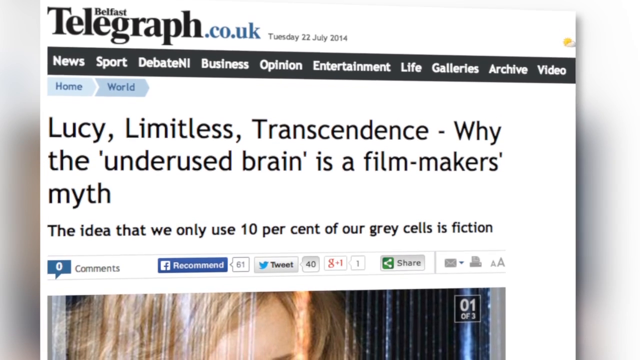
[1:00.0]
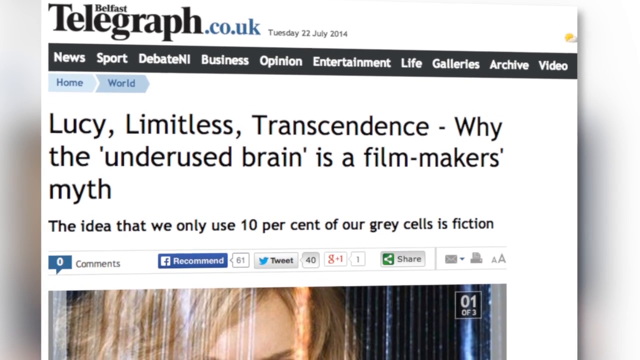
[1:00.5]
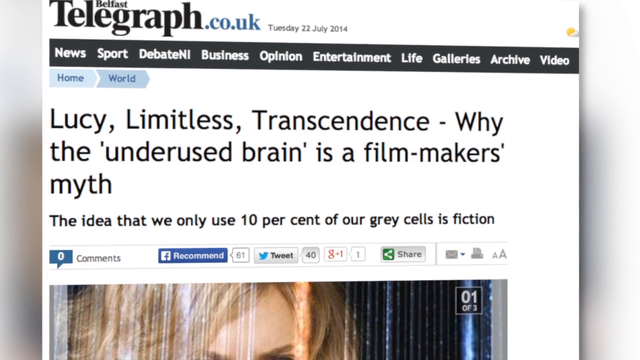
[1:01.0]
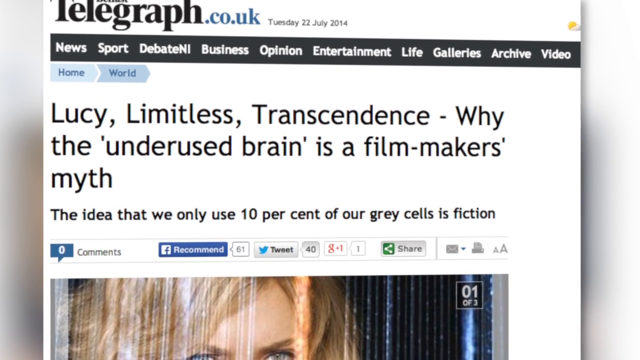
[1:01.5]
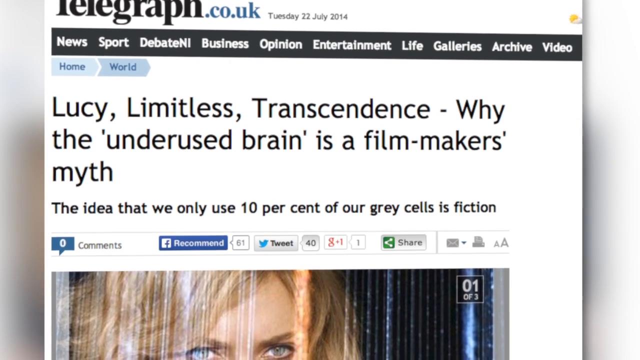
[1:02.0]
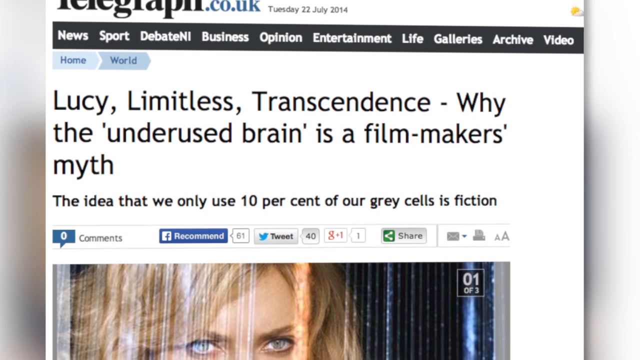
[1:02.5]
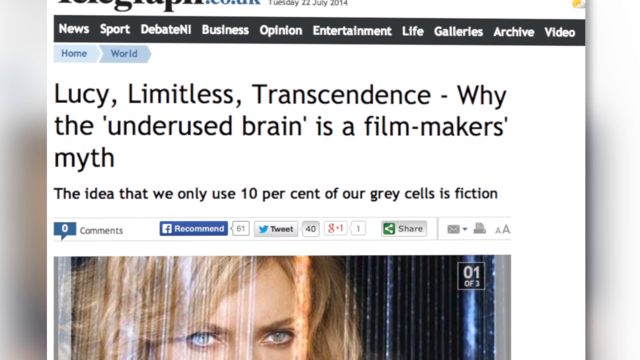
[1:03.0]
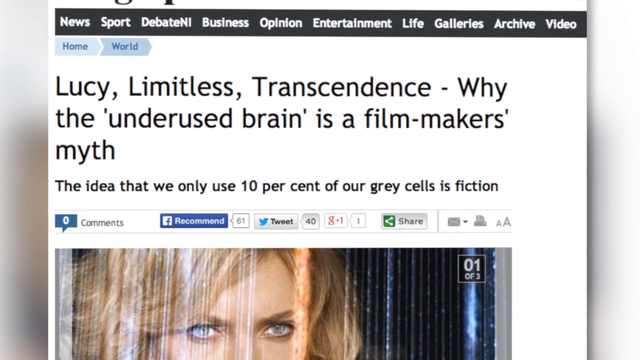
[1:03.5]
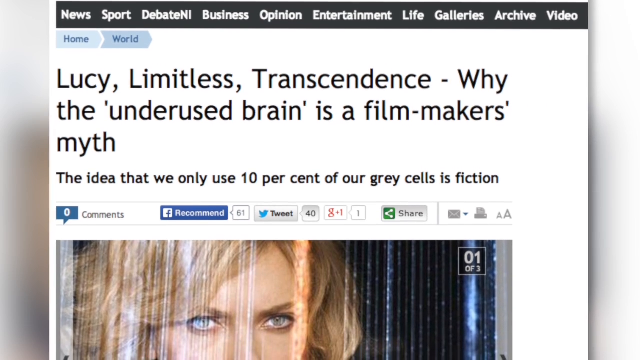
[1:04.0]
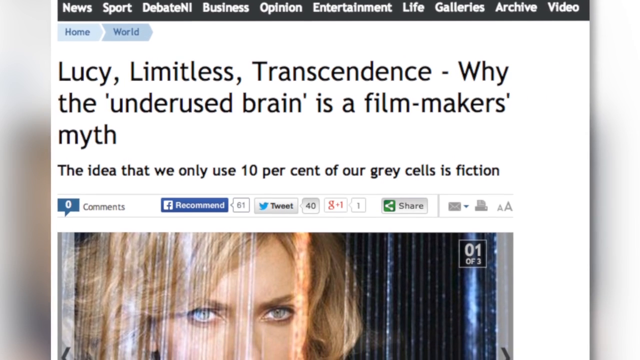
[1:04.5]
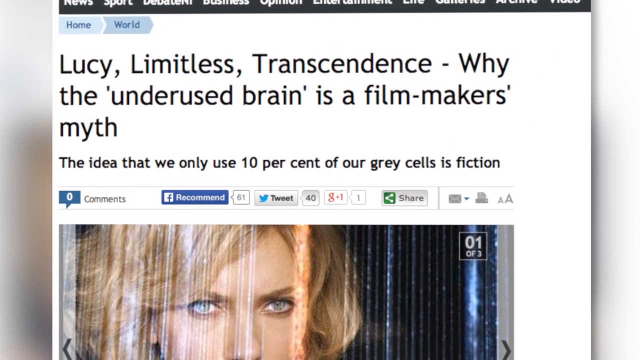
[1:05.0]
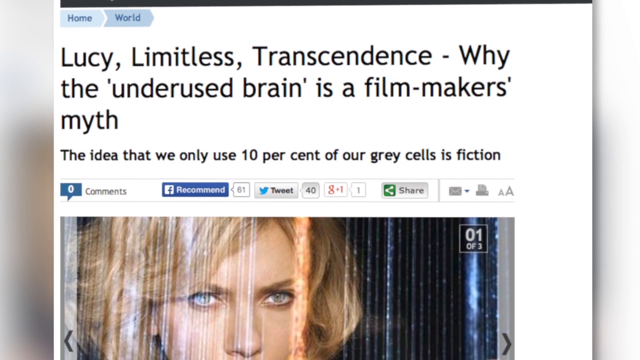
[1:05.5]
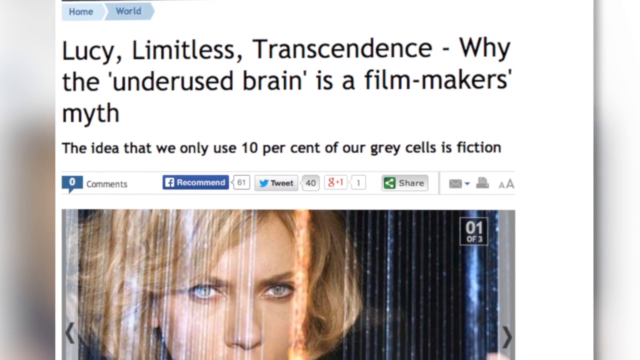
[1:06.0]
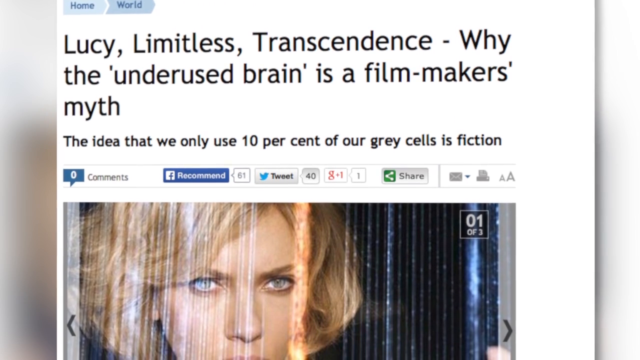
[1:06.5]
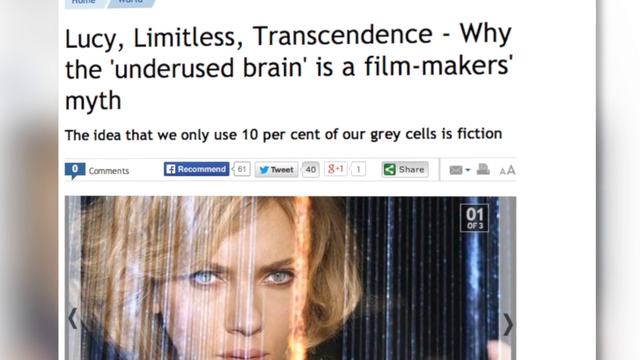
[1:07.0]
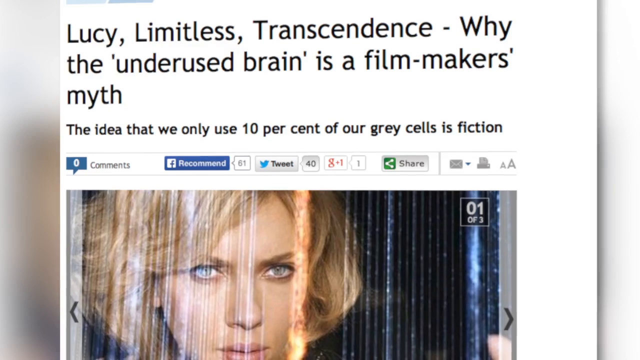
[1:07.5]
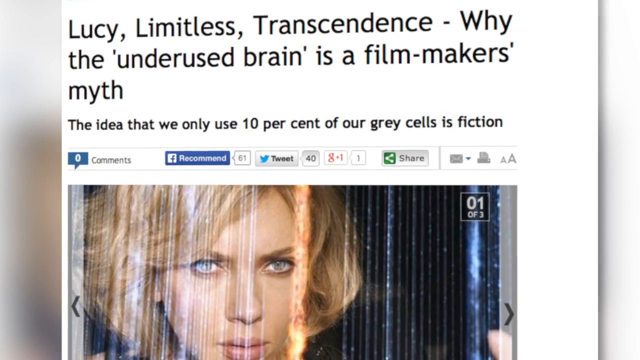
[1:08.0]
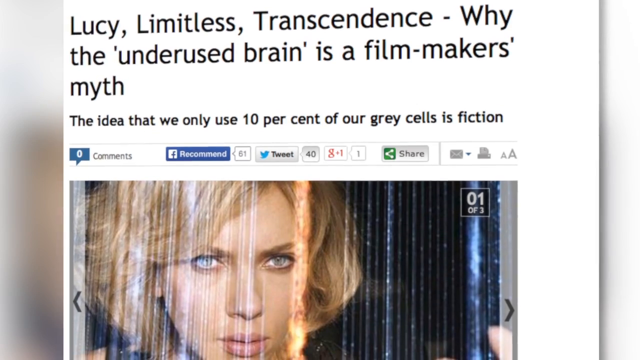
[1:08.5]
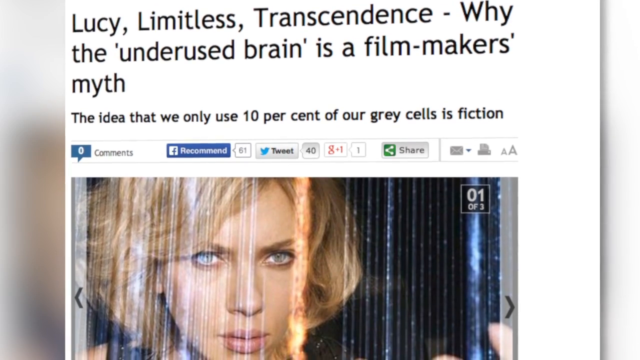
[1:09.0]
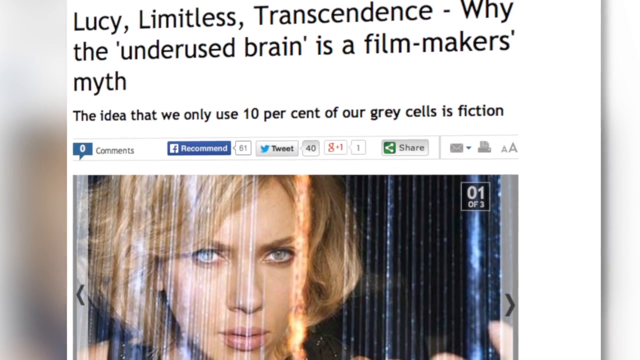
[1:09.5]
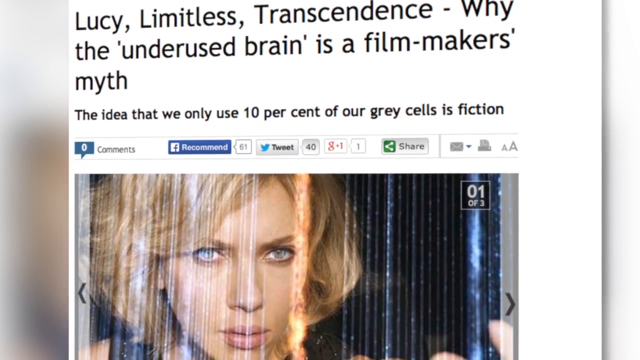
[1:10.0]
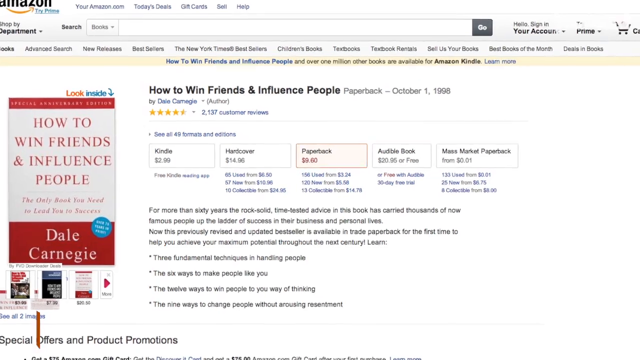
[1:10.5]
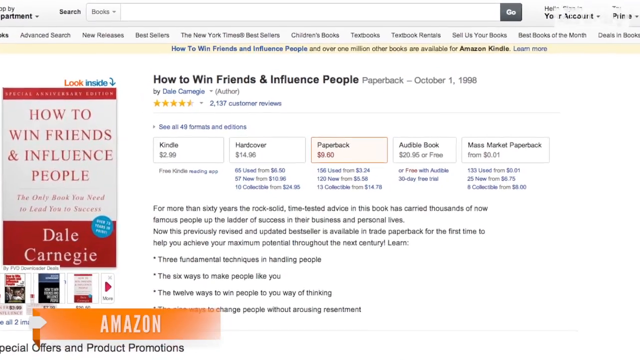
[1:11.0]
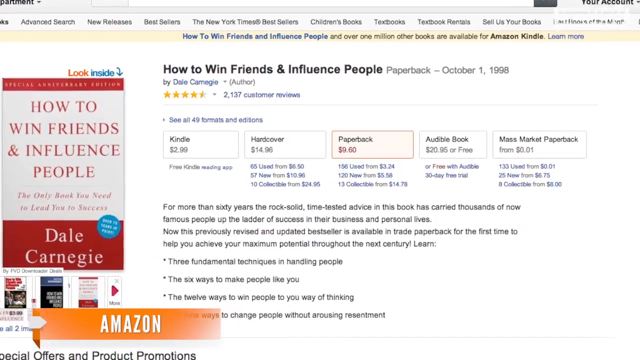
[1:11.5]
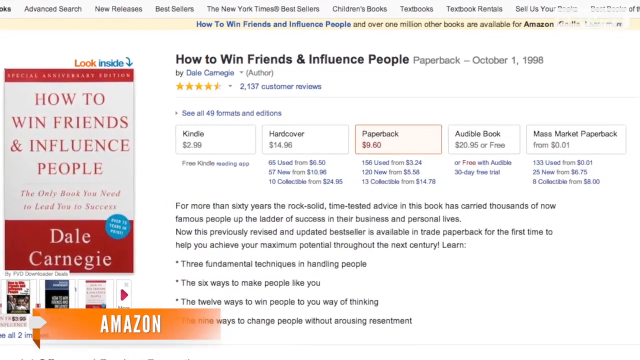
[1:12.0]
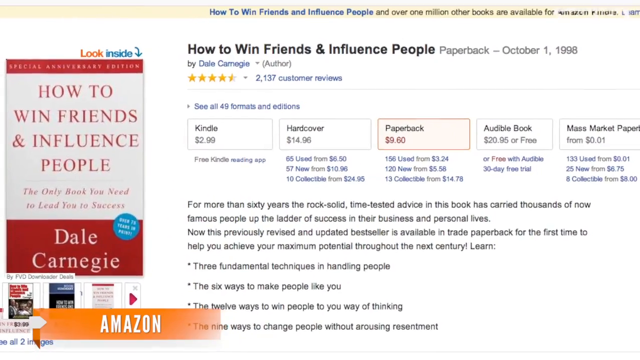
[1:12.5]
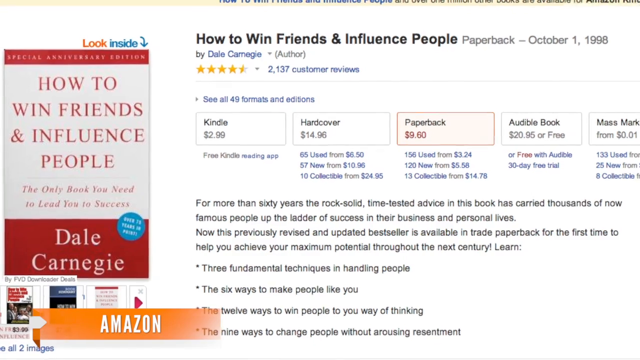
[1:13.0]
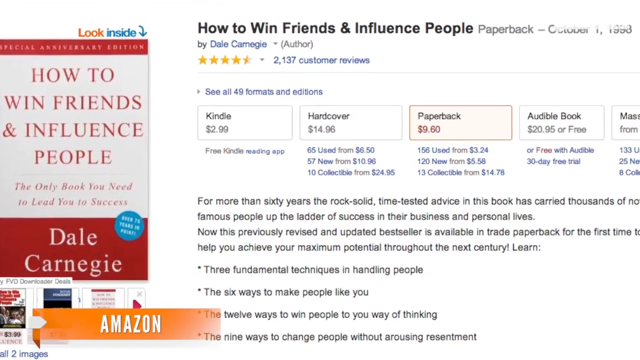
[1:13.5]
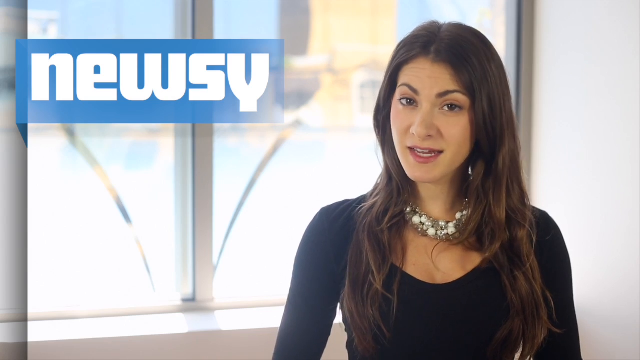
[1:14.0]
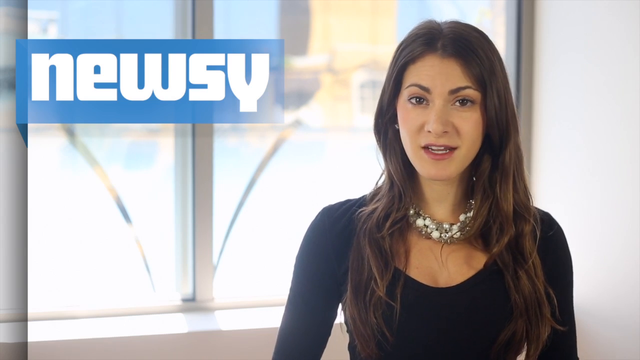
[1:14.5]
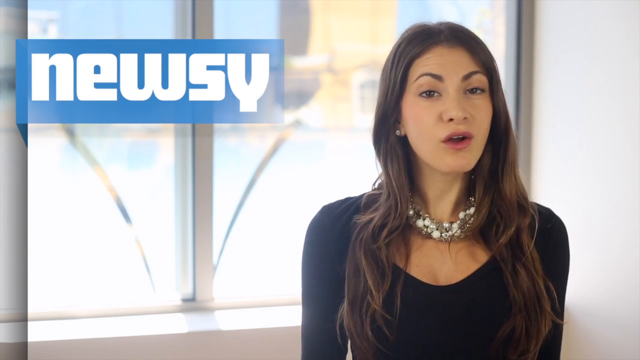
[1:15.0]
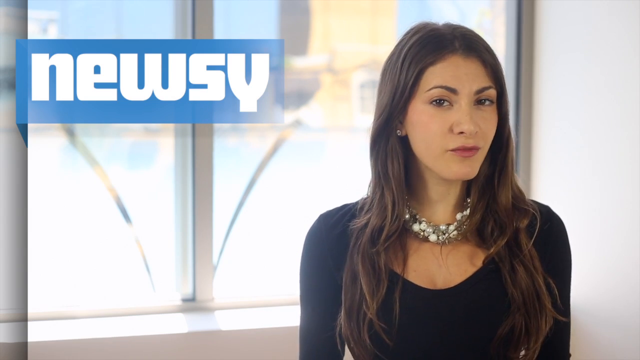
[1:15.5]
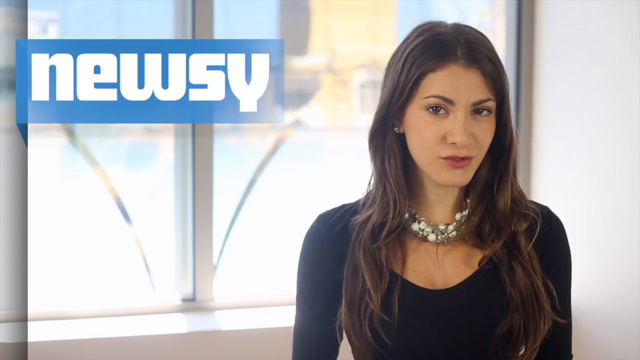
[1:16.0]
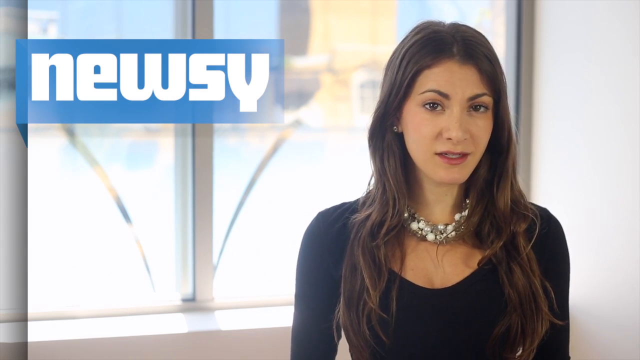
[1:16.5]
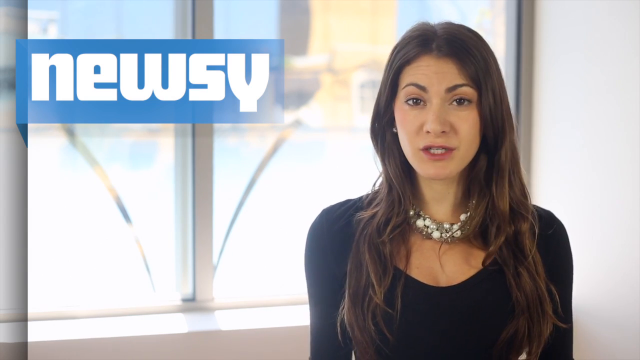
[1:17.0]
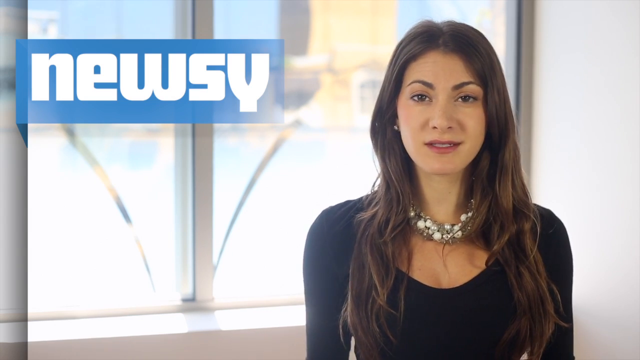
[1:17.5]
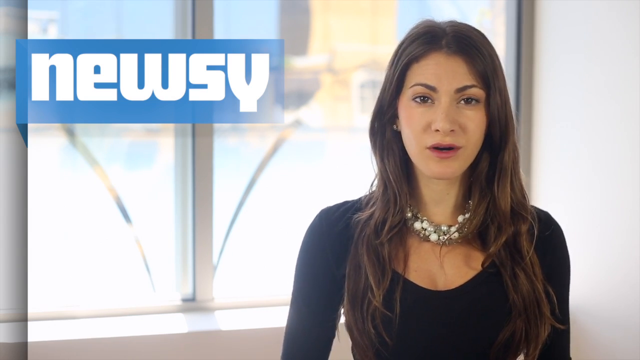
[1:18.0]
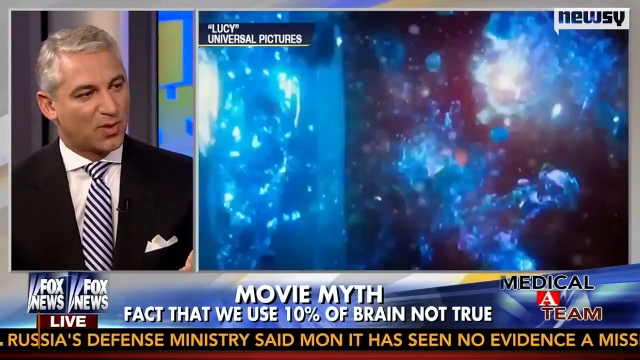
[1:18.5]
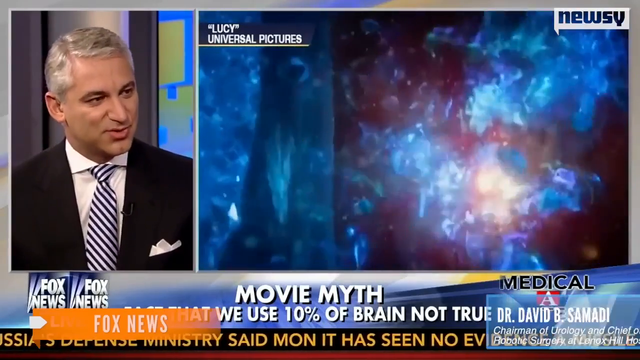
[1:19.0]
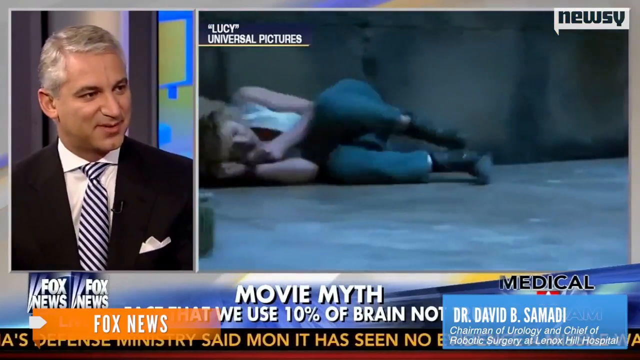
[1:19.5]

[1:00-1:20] In a segment of Newsy, what looks like a news article, magazine cover or website called BelfastTelegraph.co.uk appears, dated Tuesday, the 22nd of July, 2014. "Belfast Telegraph" is in bold black text in the upper left corner. Below it, a row of menu tabs reads from left to right: "news," "sport," "debate," "business," "opinion," "entertainment," "life," "galleries," "archive" and "video." Below that, the article's title reads "Lucy Limitless Transcendence, why the underused brain is a filmmaker's myth." The video scrolls slowly downward, exposing the face of a young blonde, blue-eyed person. Next comes an image from Amazon; zooming slowly in, it shows a book, "How to Win Friends and Influence People" by Dale Carnegie. The video switches back, and the word "amazon" is in the lower left corner. The scene closes and the video returns to the woman being interviewed or presenting the news show. She speaks to the camera, wearing a black scoop top or dress and a twisted pearl necklace. She looks to be in her late 20s, possibly early 30s, Caucasian, with brown eyes. The word "newsy" in bold white text is a logo in the upper left corner against a blue background.